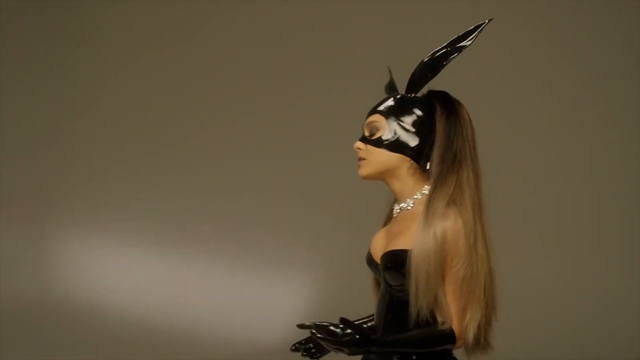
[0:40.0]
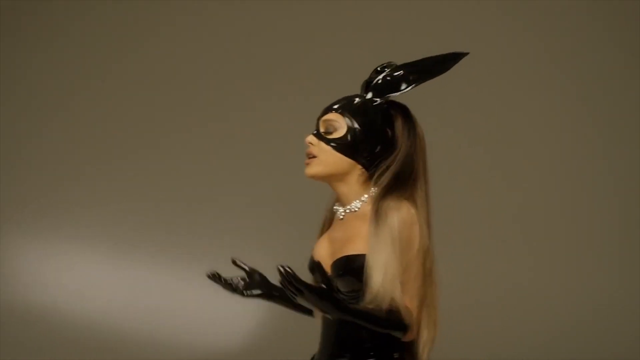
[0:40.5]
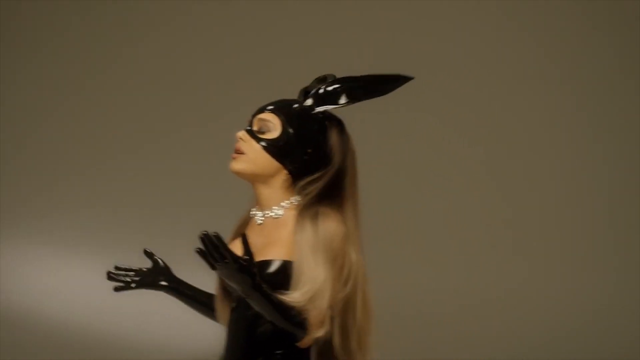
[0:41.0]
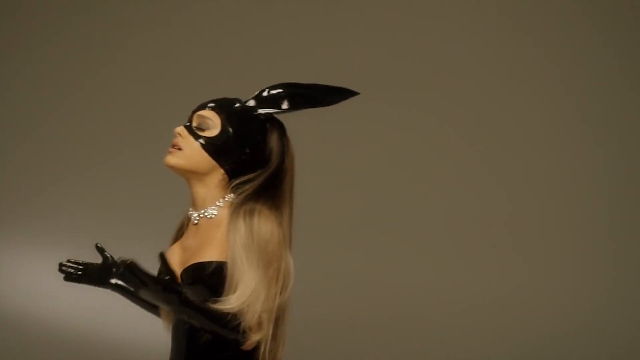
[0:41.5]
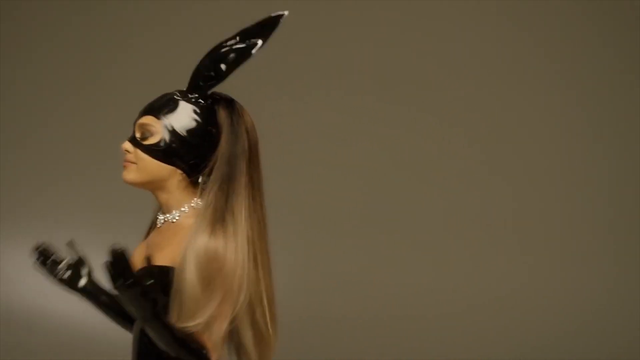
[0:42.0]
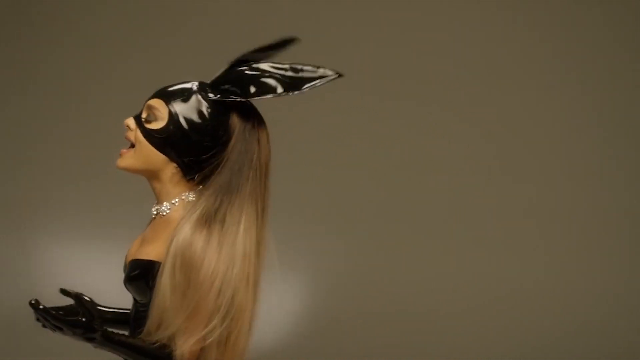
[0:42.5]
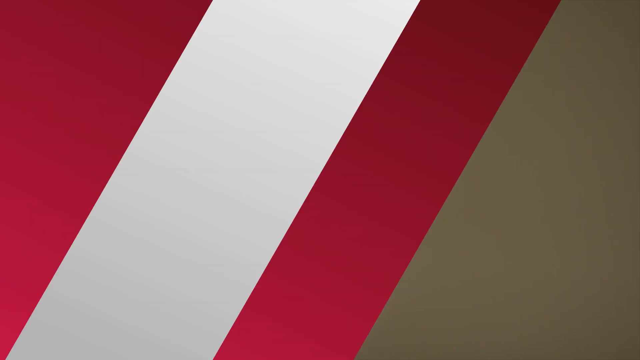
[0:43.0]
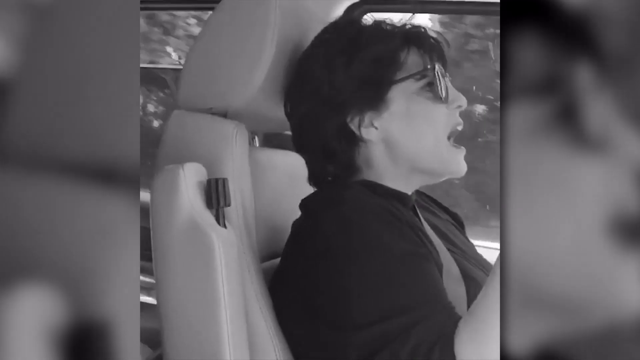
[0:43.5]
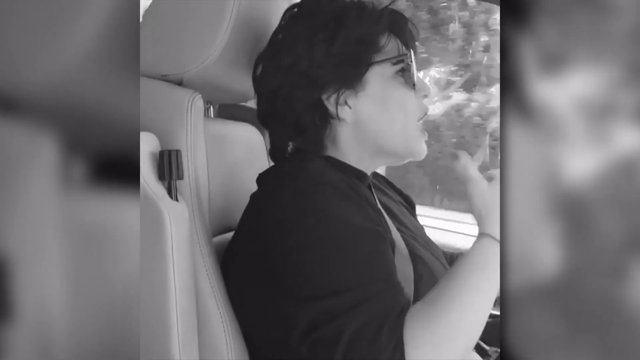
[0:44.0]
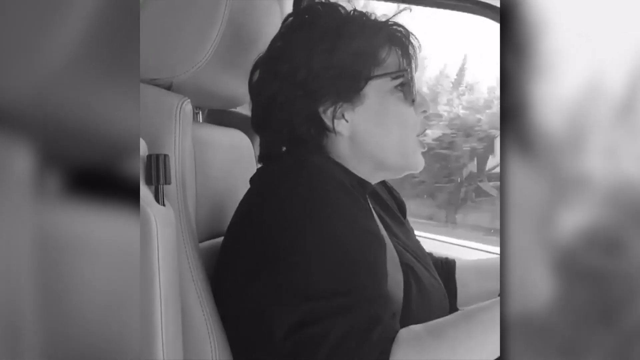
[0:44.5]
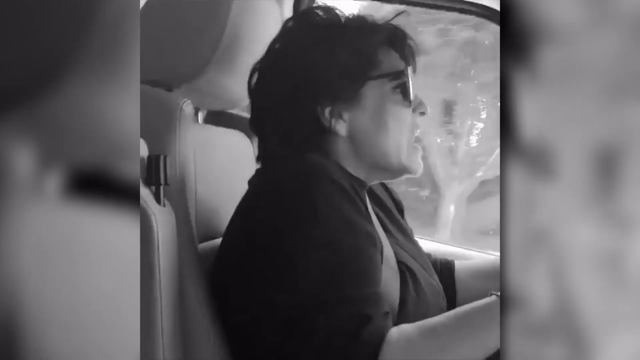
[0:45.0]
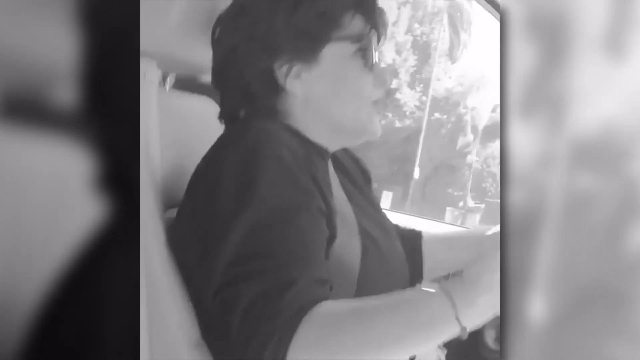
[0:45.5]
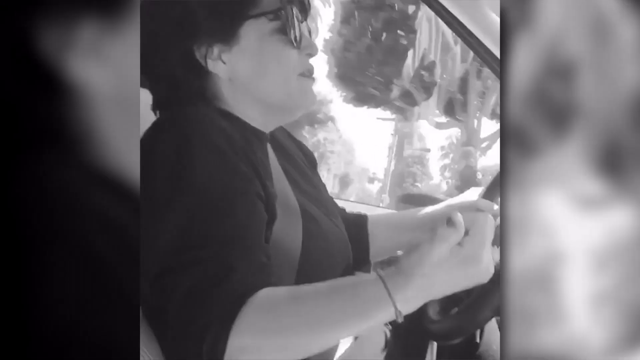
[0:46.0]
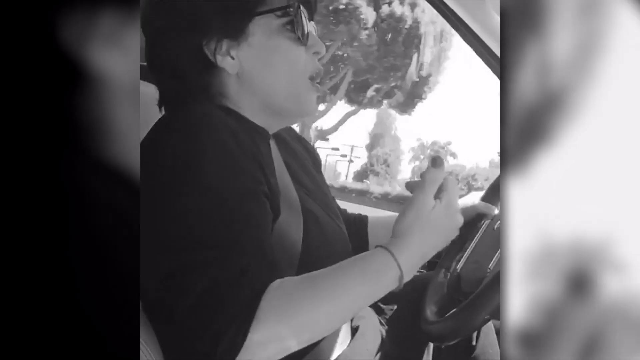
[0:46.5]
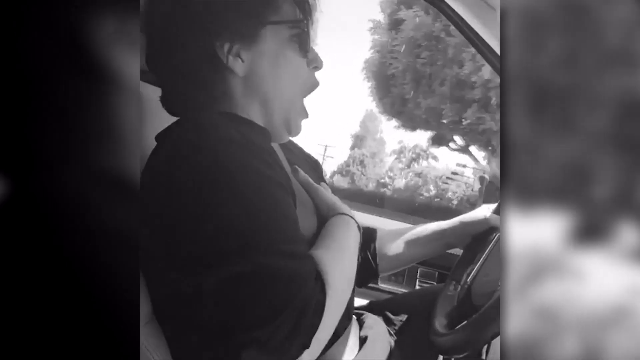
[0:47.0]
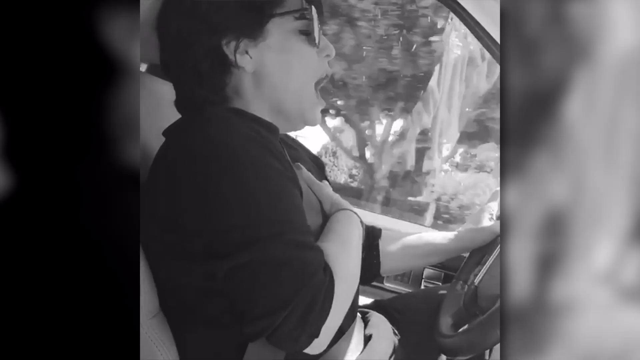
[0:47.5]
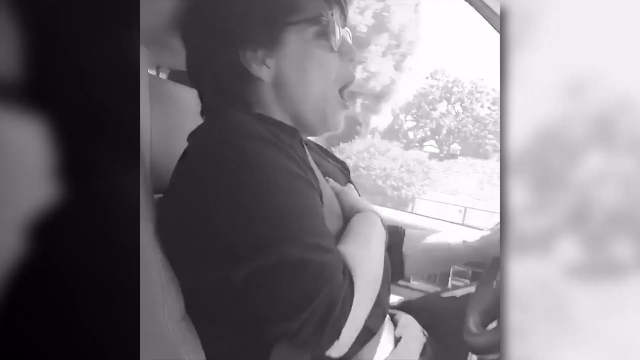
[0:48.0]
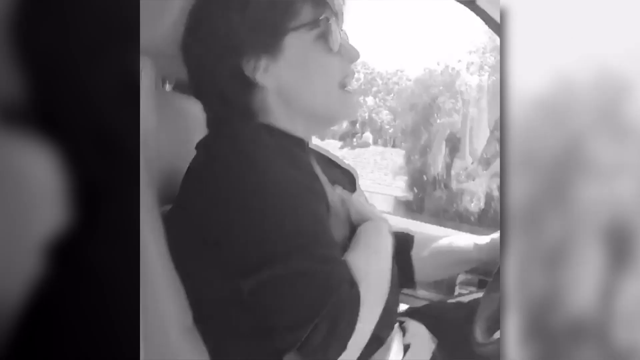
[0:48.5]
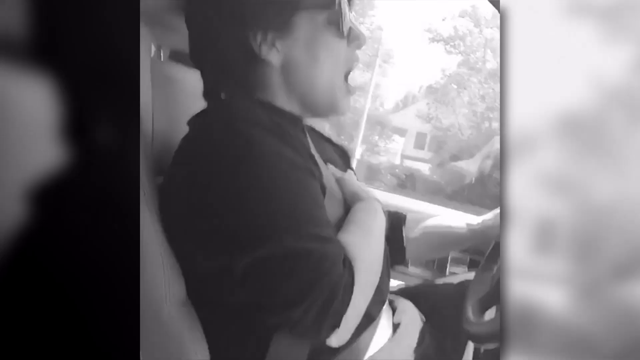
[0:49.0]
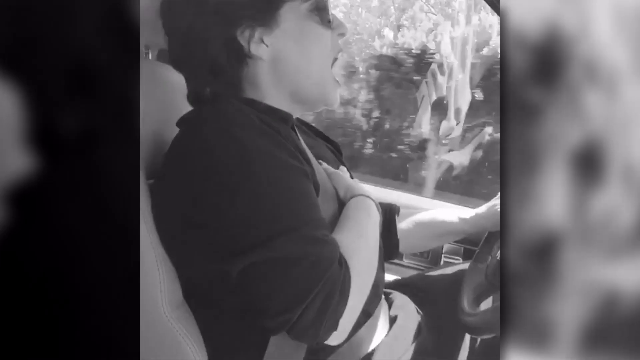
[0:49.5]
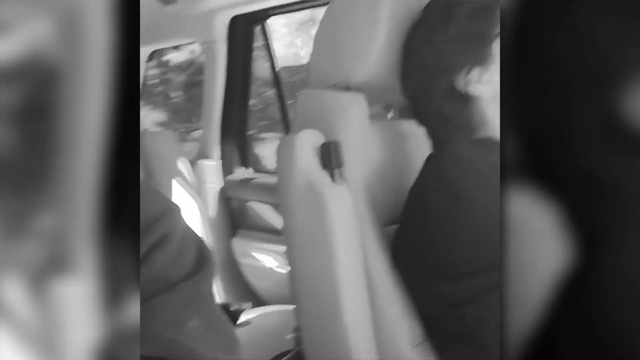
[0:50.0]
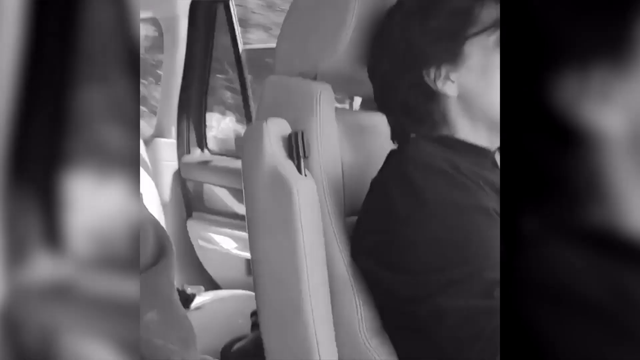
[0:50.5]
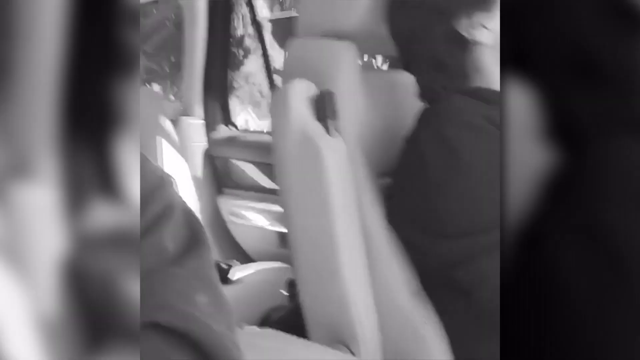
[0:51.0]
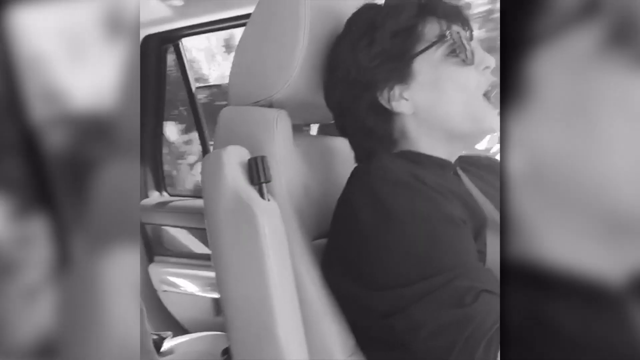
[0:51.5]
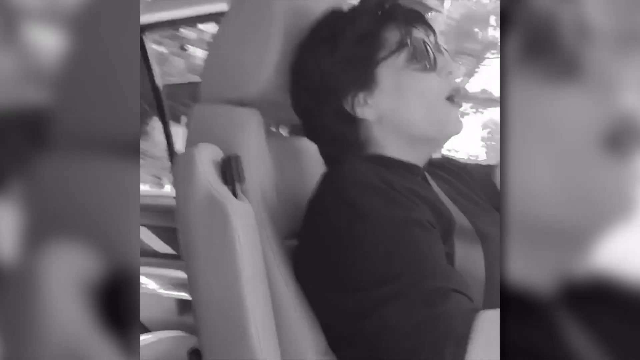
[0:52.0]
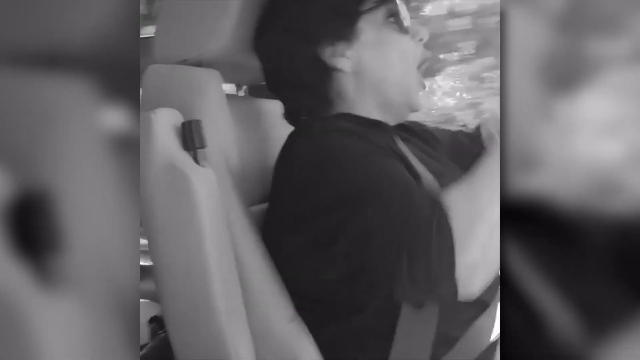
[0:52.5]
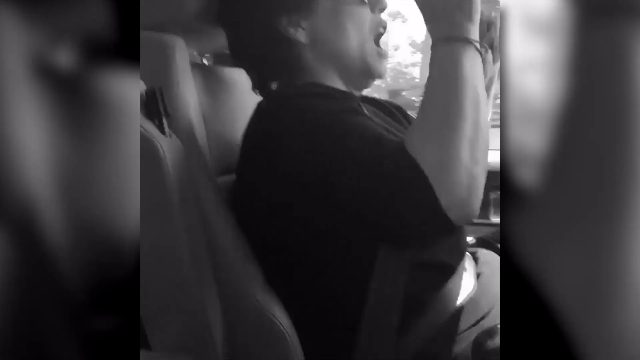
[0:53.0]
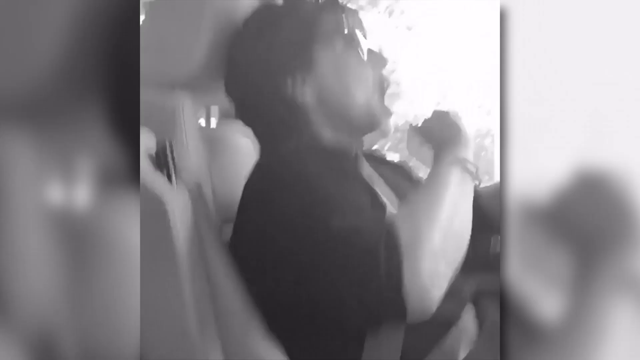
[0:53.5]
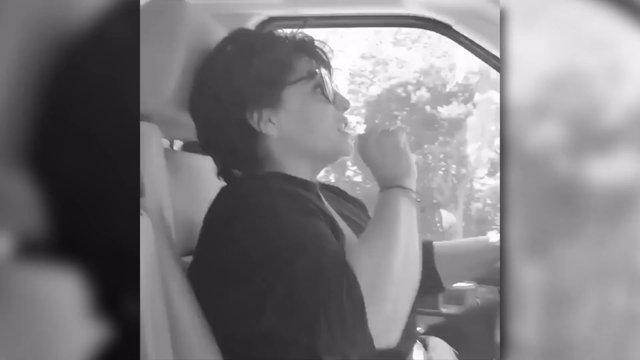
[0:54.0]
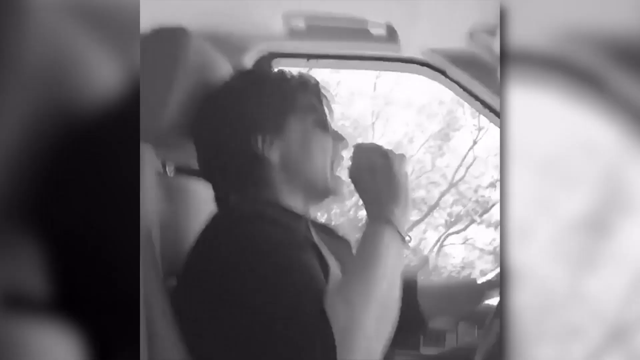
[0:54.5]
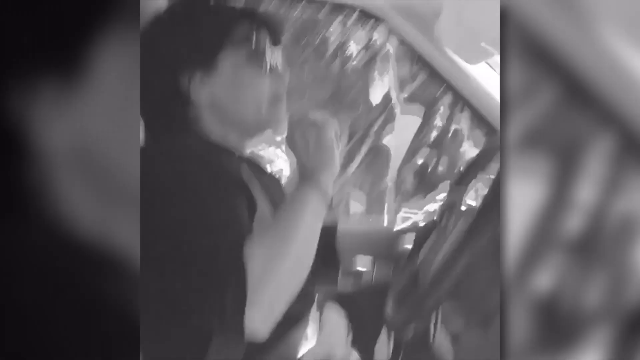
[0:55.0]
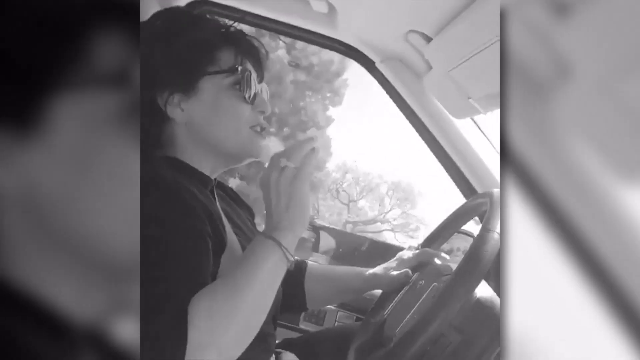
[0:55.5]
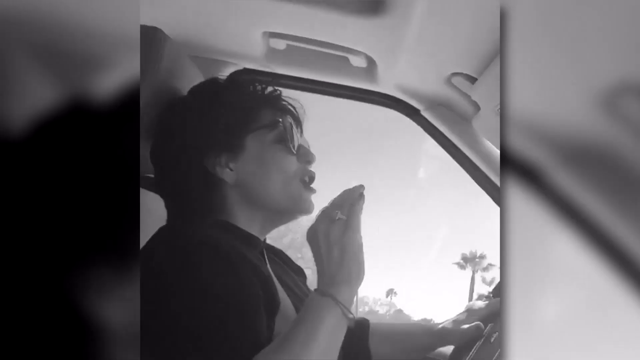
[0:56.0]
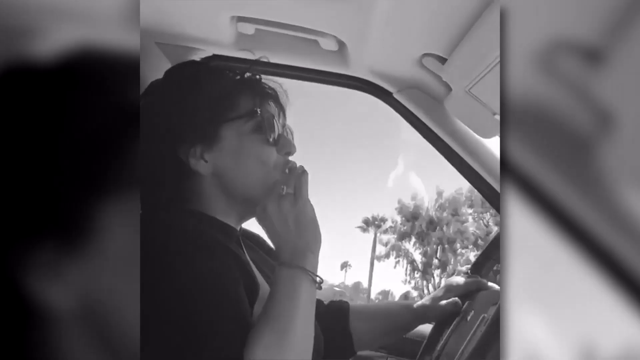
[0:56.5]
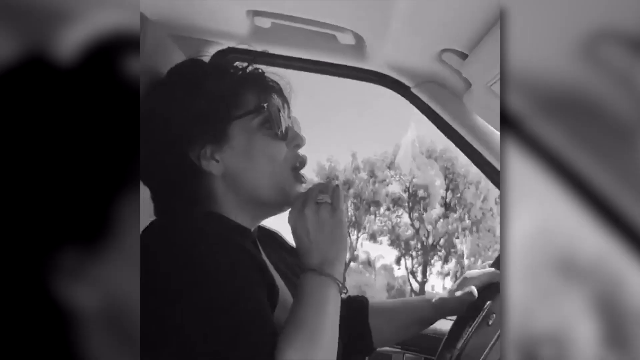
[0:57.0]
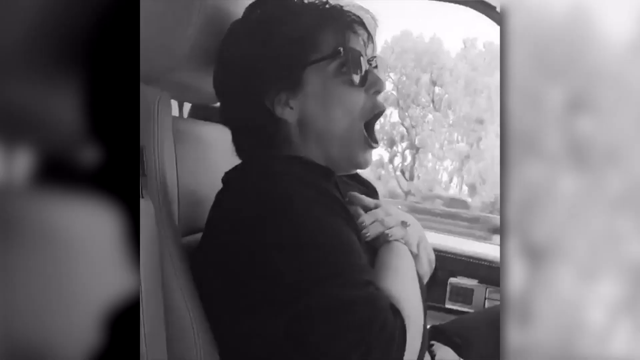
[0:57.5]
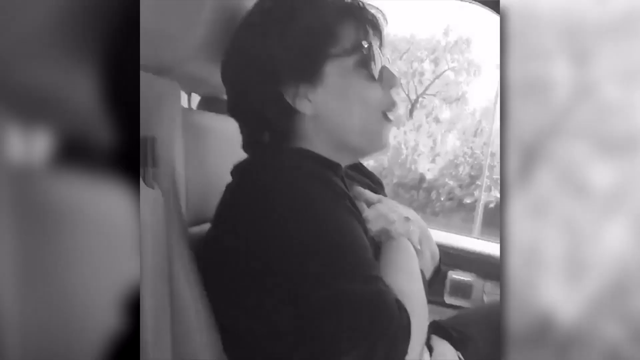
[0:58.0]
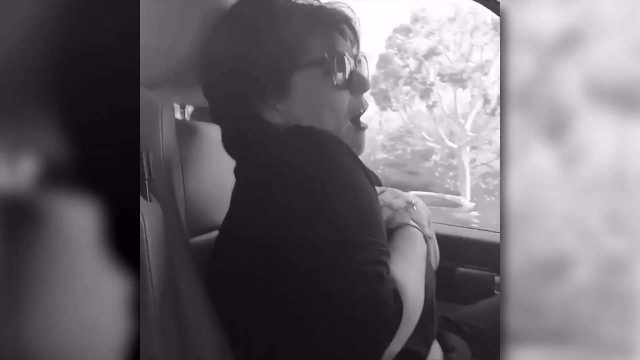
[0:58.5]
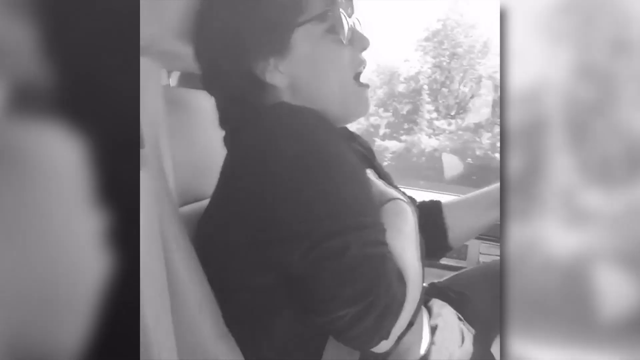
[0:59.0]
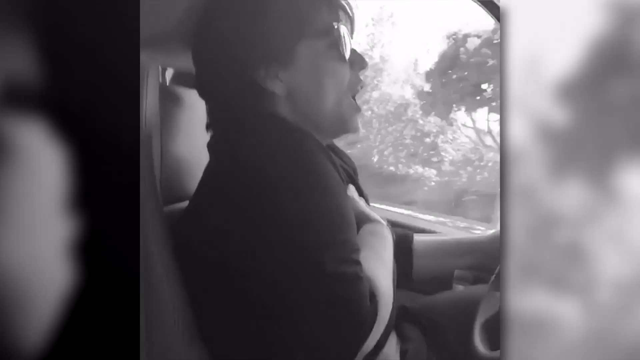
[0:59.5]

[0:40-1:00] A young woman stands turned toward her right, facing the left side of the frame. She wears a sexy black top, black gloves, a black mask with two ears on top somewhat like rabbit ears, and a choker necklace. She appears to be Caucasian and is probably singing as she walks toward the left, when a horizontal graphic suddenly appears. The video then cuts to a woman in the car, talking with her right hand touching her chest. She then shakes her fingers back and forth and makes a crisscross with both hands, taking them off the wheel for a moment as she speaks very emotionally. Through the driver's-side window, trees, homes and what might be a suburban area are visible outside.